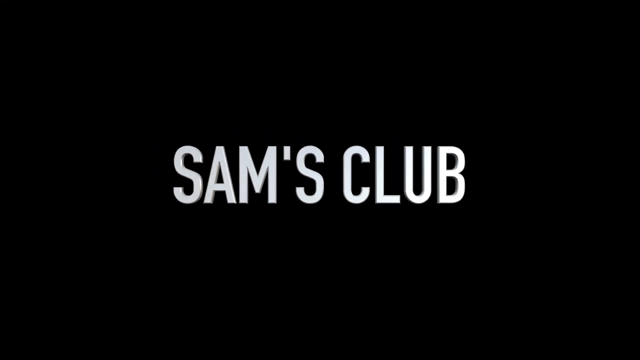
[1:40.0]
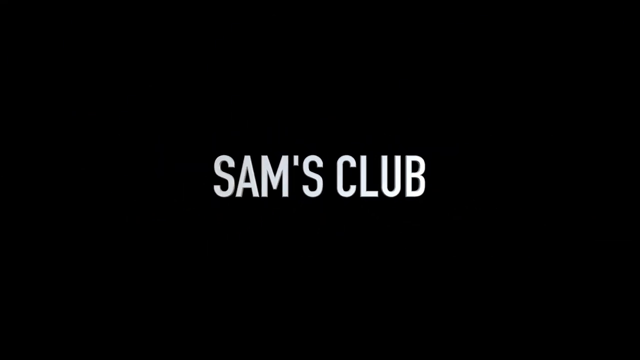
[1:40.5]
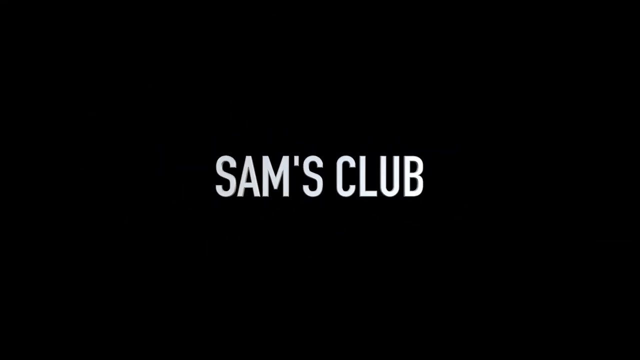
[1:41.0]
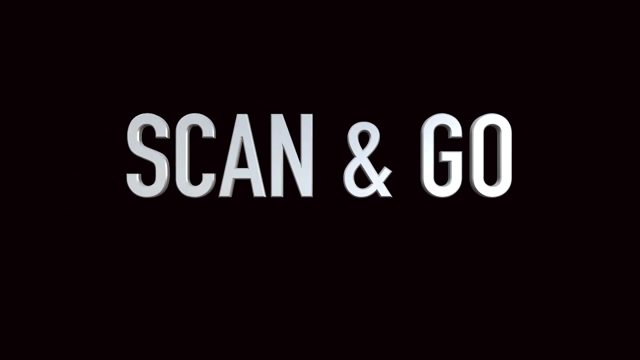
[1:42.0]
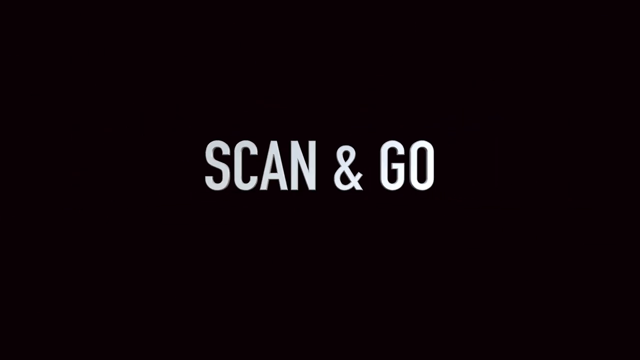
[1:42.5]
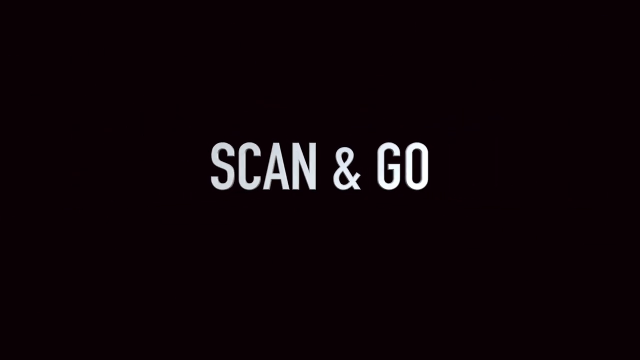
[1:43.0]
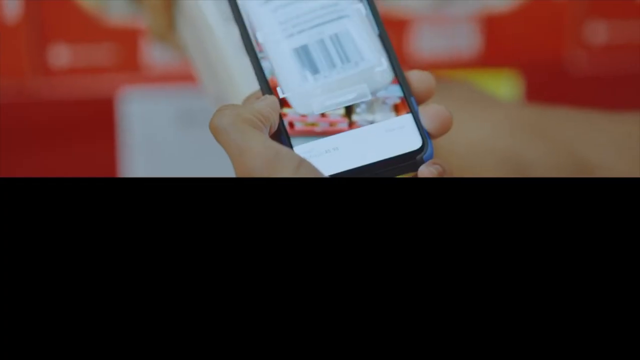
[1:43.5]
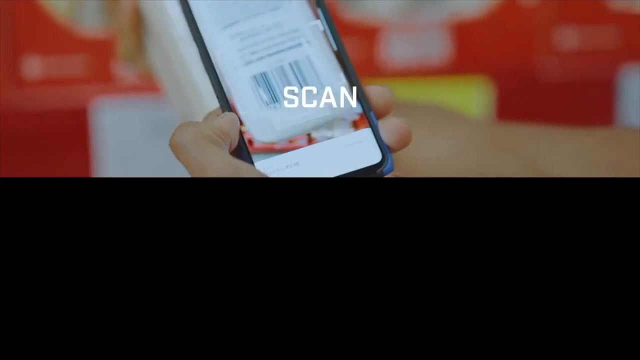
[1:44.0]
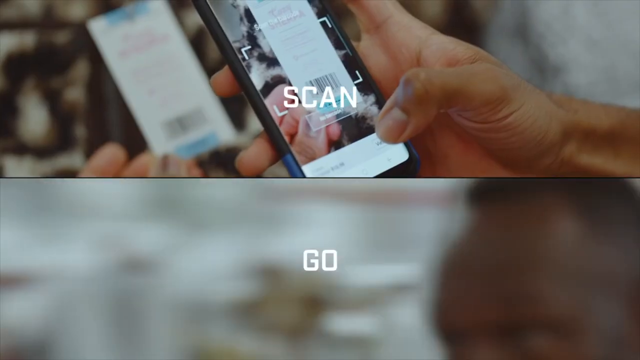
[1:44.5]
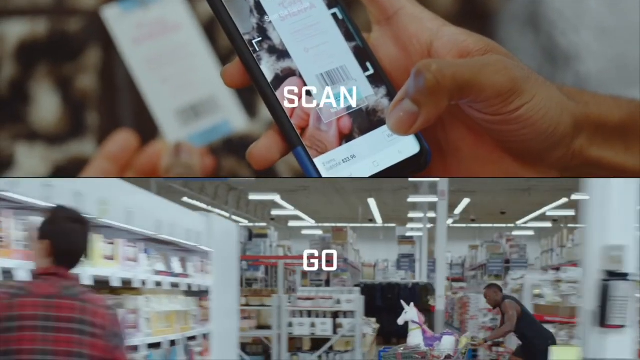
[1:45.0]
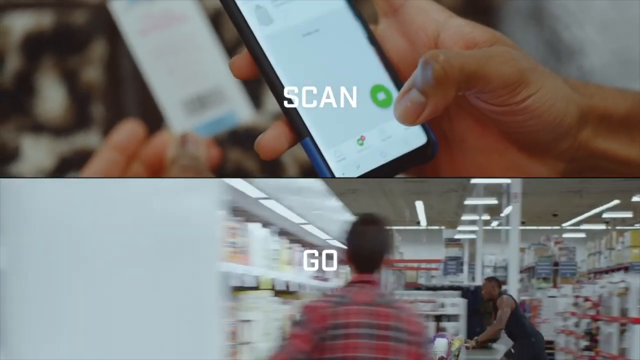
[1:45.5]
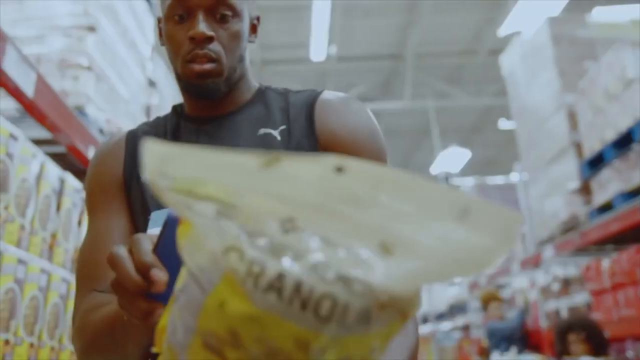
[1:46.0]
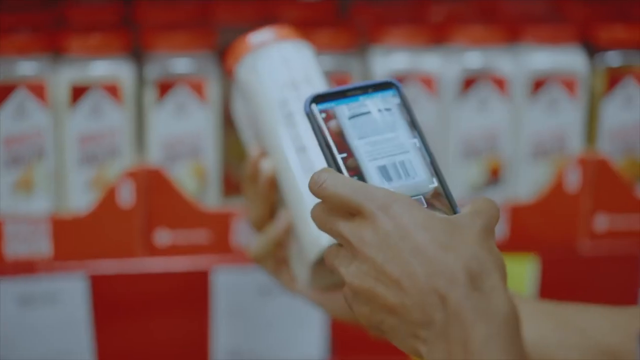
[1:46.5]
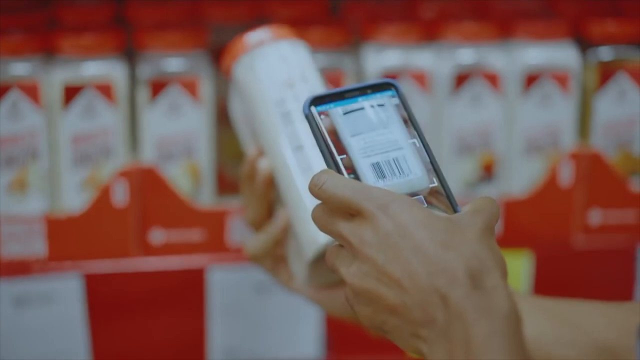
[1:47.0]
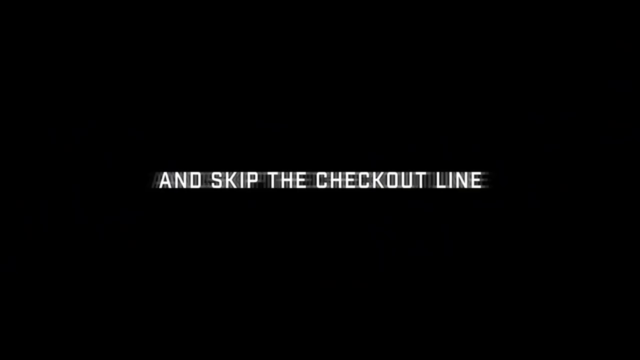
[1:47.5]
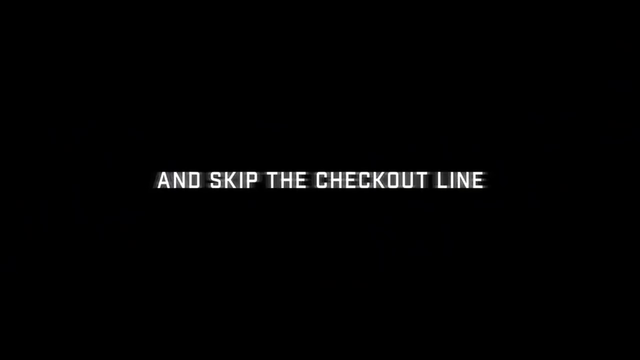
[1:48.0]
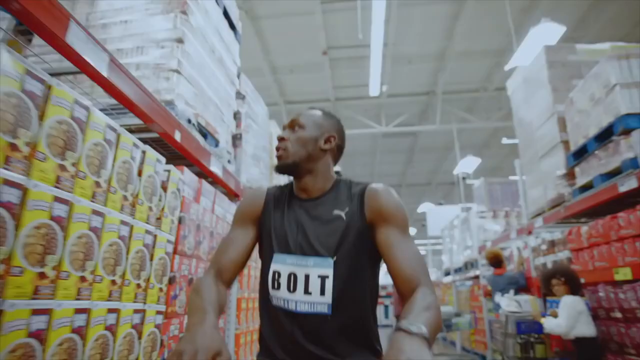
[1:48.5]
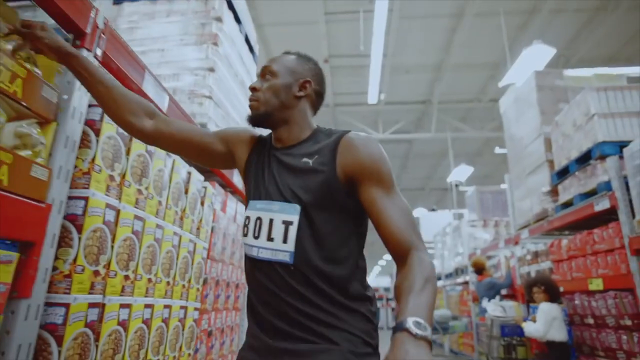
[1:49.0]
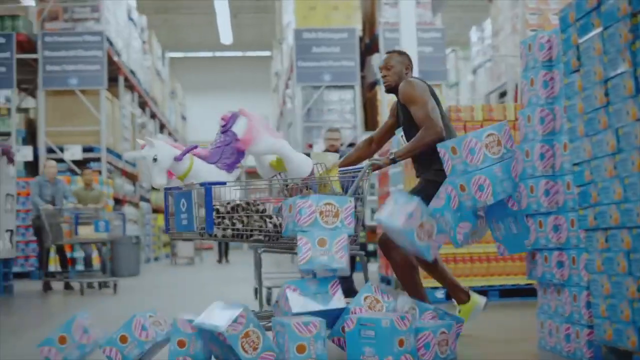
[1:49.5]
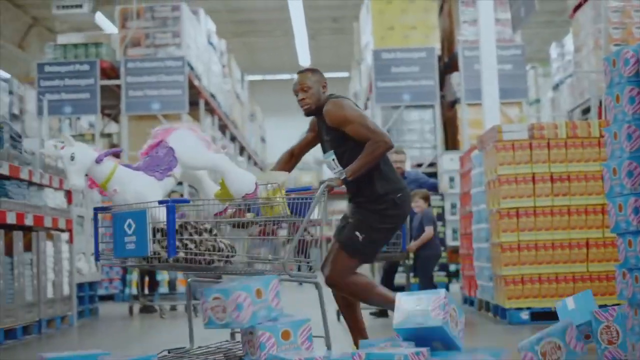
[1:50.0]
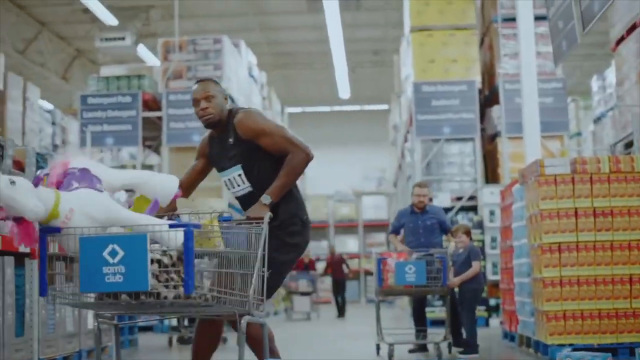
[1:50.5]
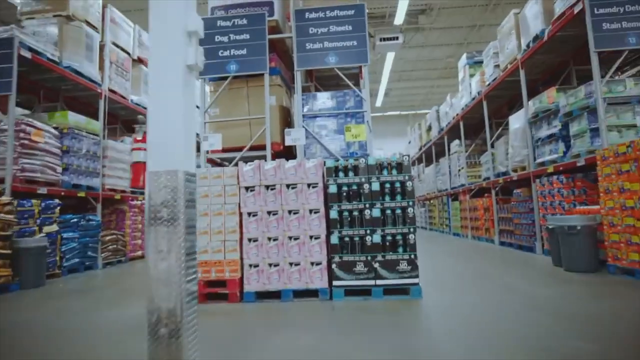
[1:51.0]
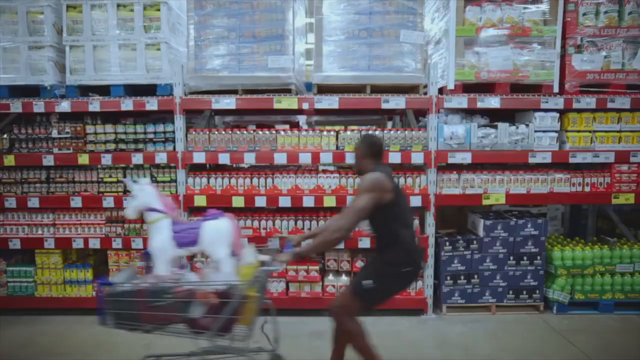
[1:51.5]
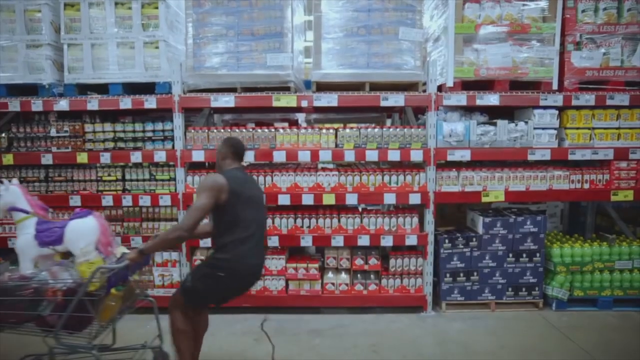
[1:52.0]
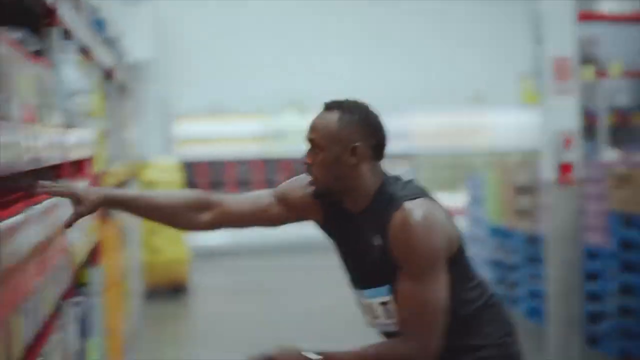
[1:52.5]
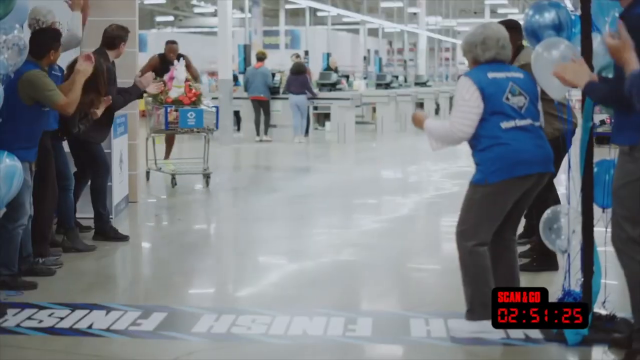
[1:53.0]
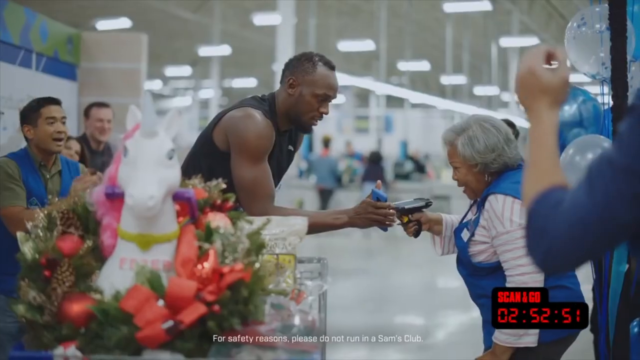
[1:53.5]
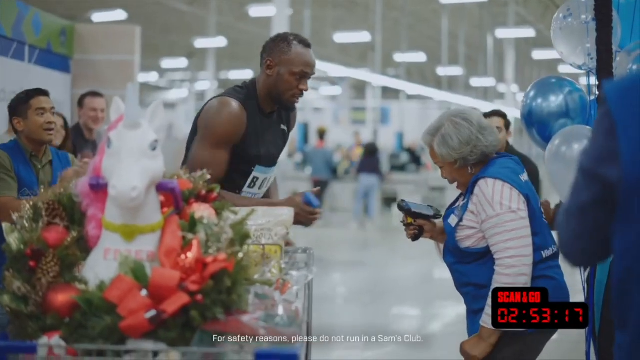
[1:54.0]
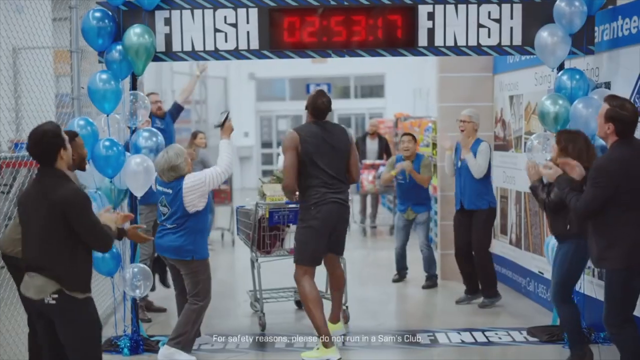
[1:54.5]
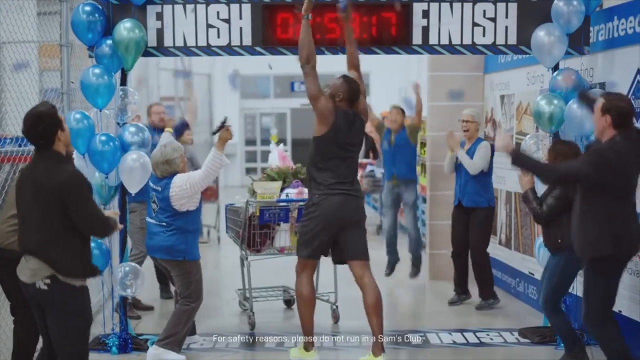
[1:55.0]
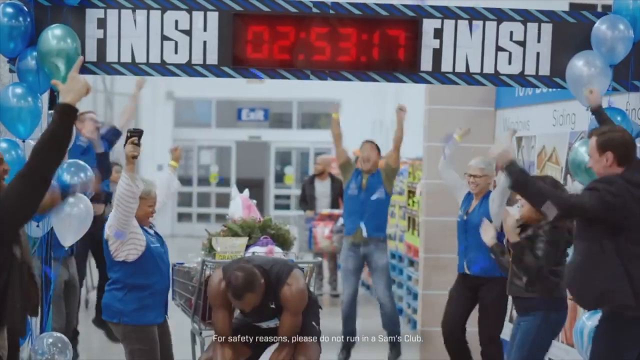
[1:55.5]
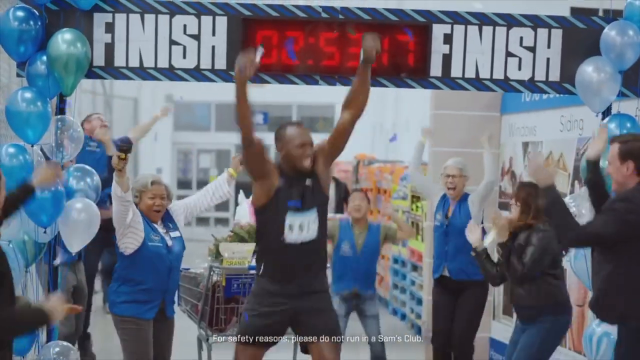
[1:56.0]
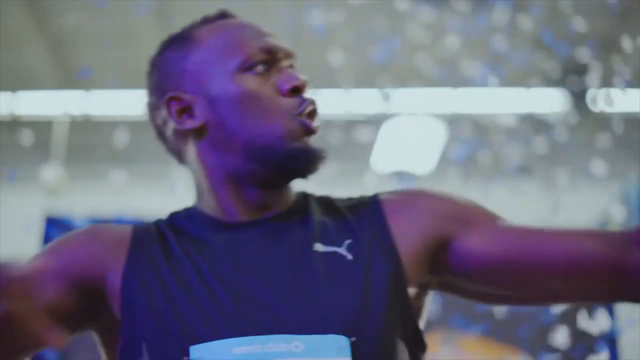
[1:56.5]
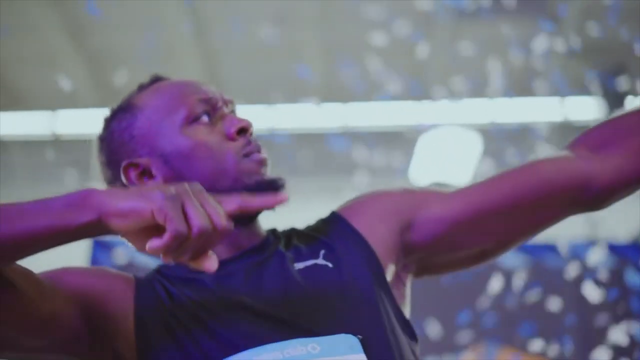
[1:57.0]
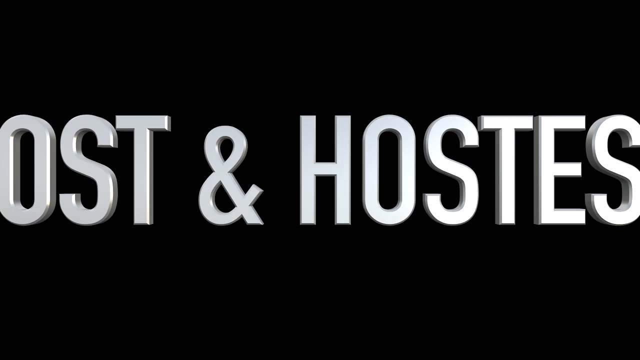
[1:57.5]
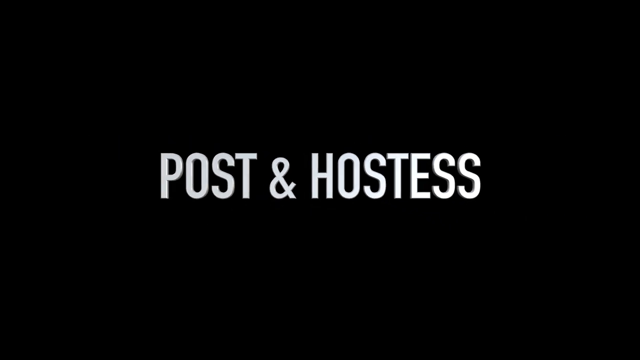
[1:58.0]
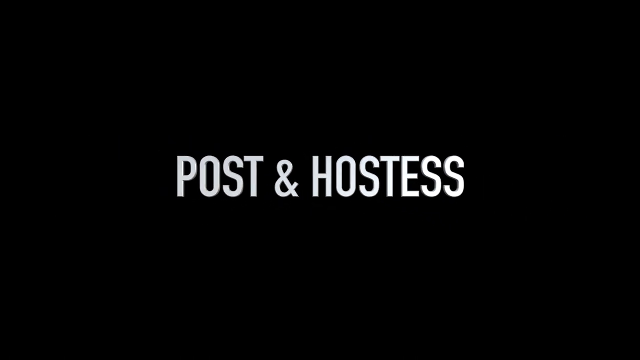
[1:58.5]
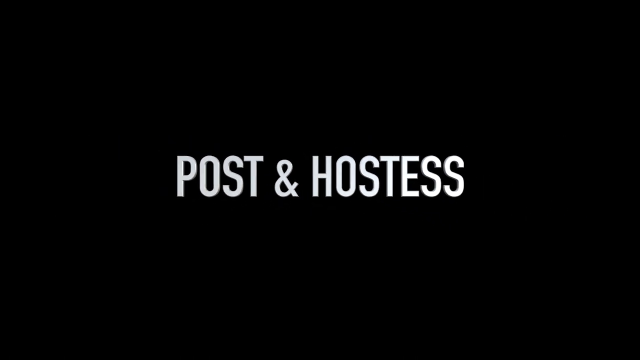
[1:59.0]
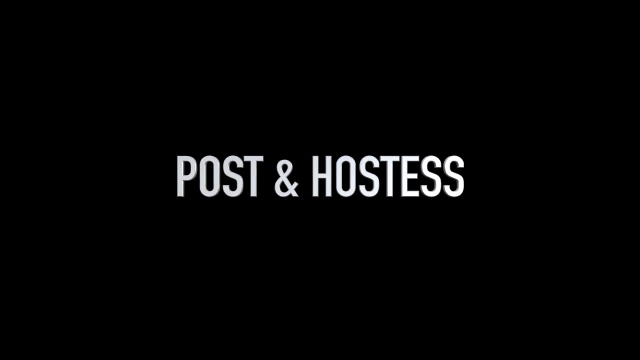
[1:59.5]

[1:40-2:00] White text on an all-black background reads "Sam's Club" and gets smaller, followed by "Scan and Go" in white, which also shrinks. Someone then uses a smartphone to scan barcodes in a store, with "Scan" written in white across the upper portion of the screen; the lower portion shows a slightly different video of someone racing around a store with a trolley, with "Go" written on it in white. A closer, zoomed view follows of the person scanning the barcodes of items in the store. The screen turns all black with the white text "and skip the checkout line". A black man rushes through a store, picking items and throwing them into his trolley as quickly as he can, then runs to a finish line, gets the final item scanned, and people cheer as he races through the finish line. The final heading reads "Post and Hostess" in white against an all-black background.